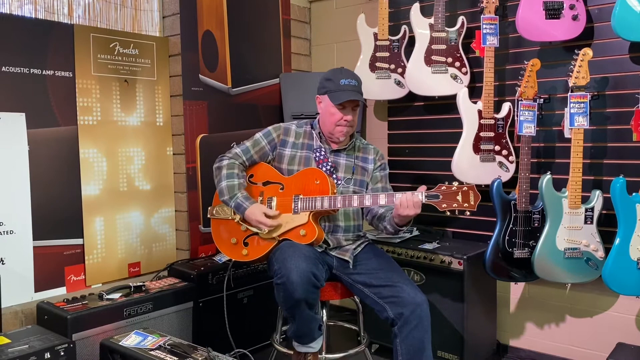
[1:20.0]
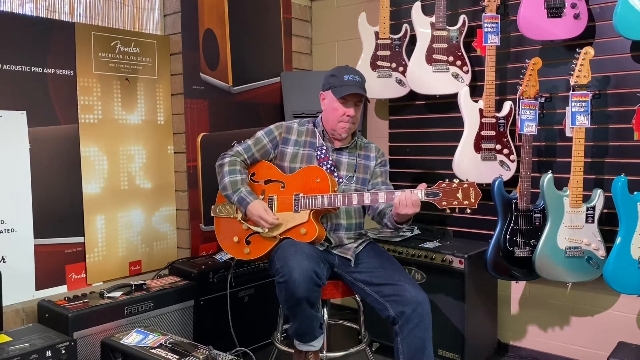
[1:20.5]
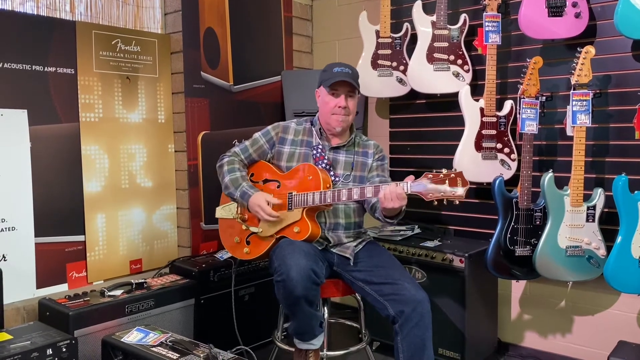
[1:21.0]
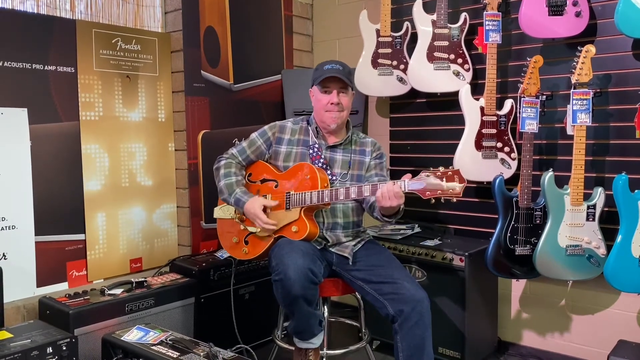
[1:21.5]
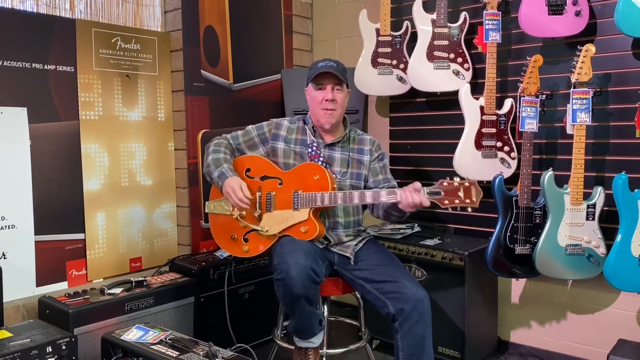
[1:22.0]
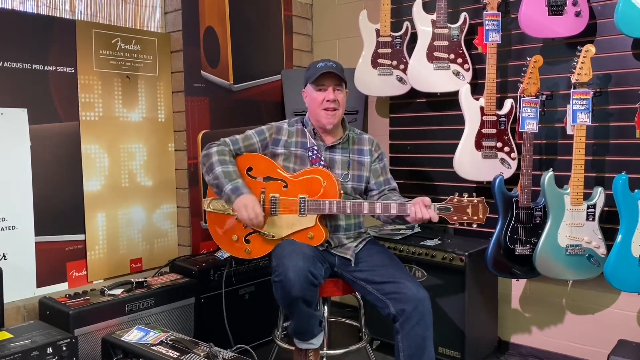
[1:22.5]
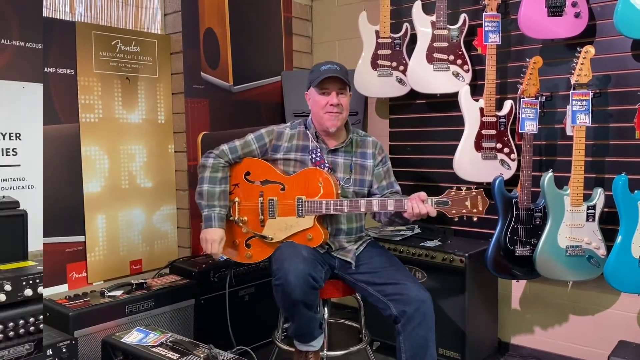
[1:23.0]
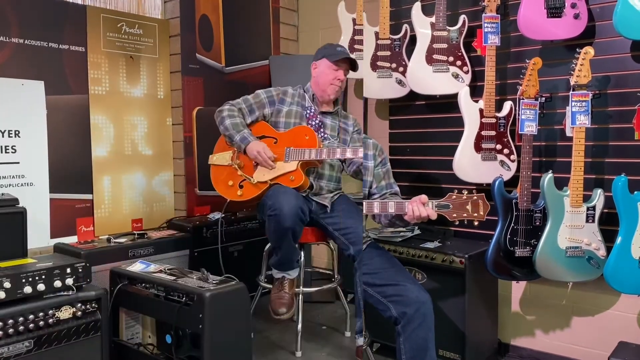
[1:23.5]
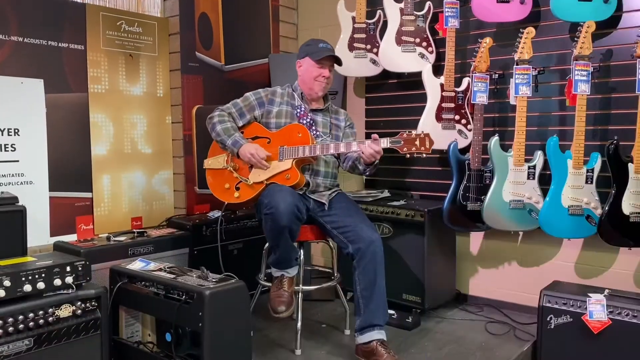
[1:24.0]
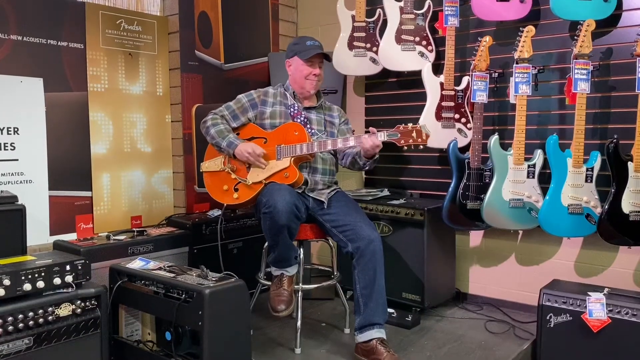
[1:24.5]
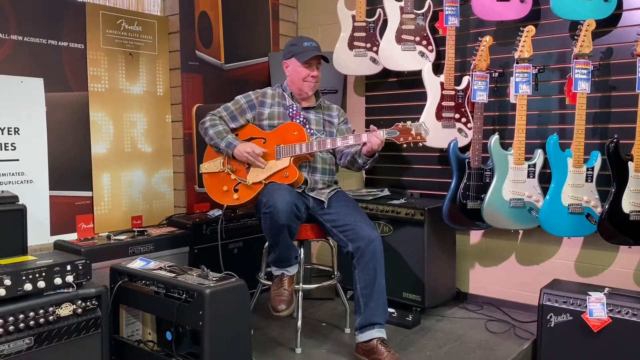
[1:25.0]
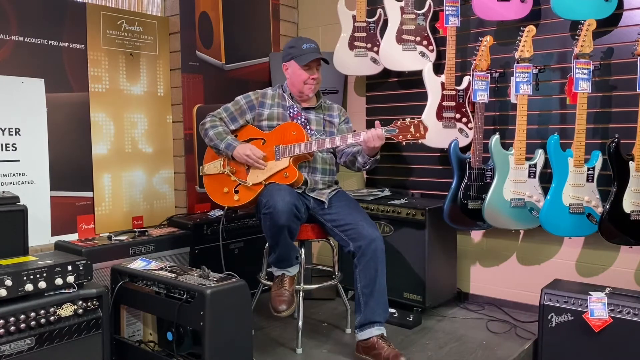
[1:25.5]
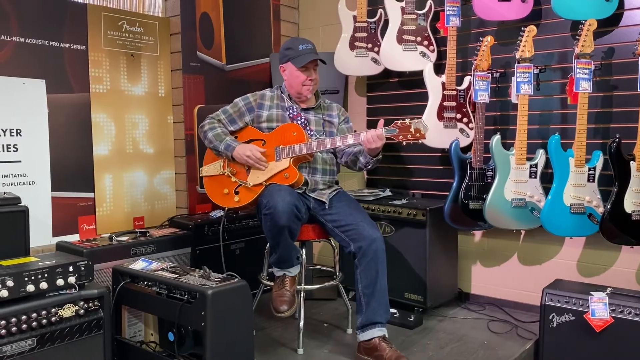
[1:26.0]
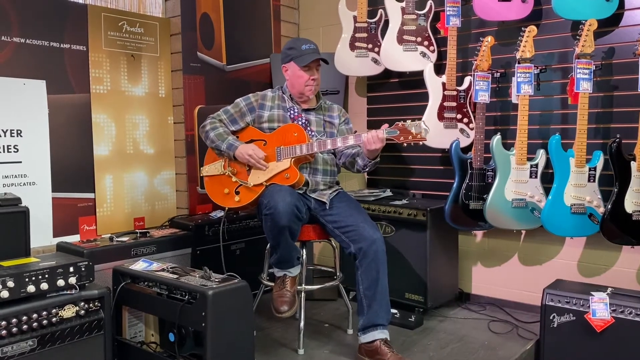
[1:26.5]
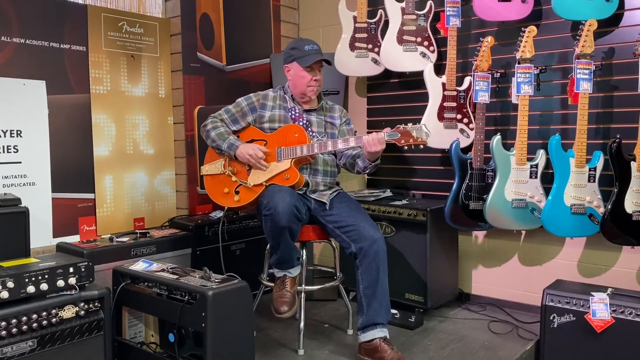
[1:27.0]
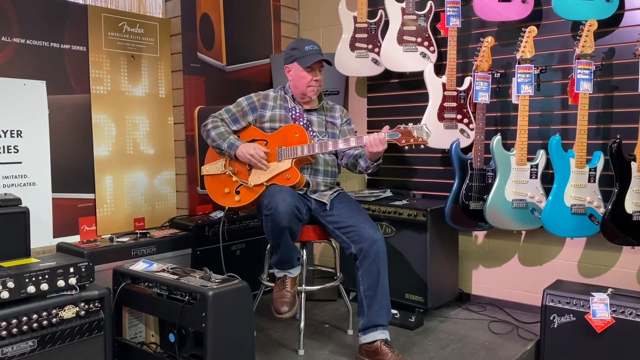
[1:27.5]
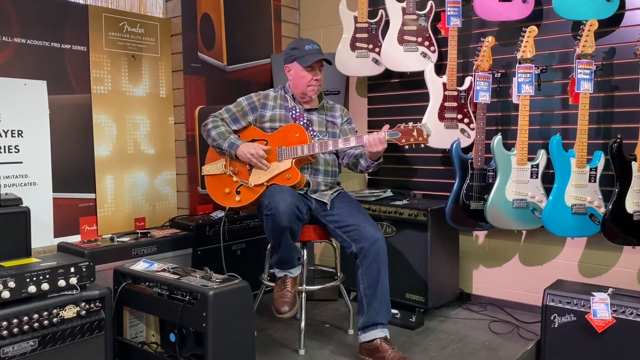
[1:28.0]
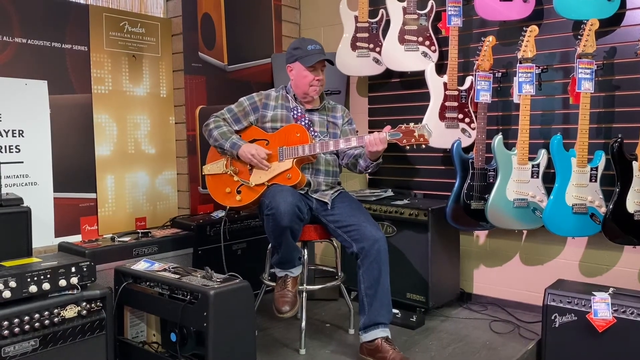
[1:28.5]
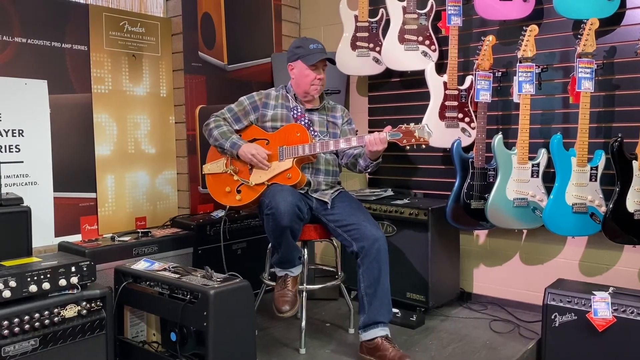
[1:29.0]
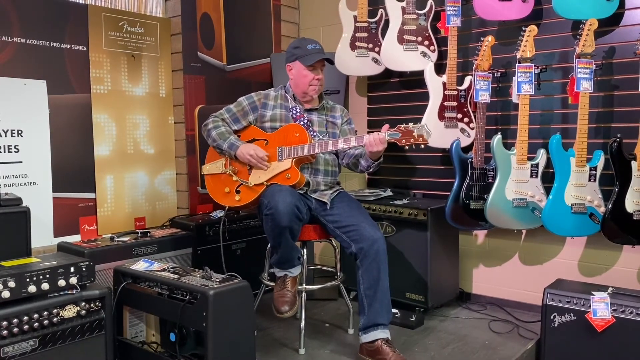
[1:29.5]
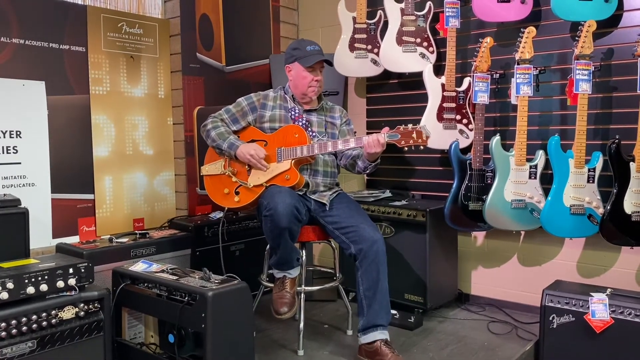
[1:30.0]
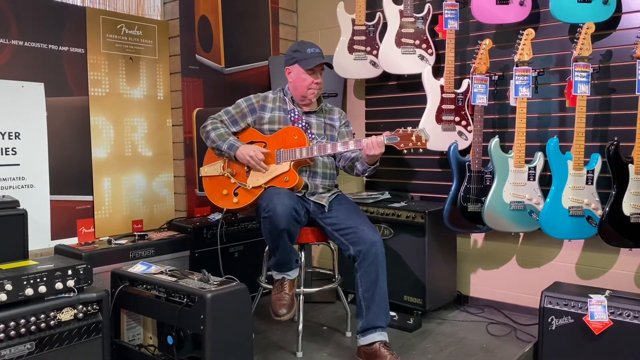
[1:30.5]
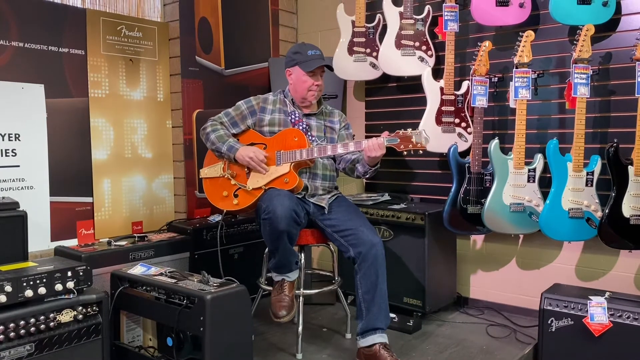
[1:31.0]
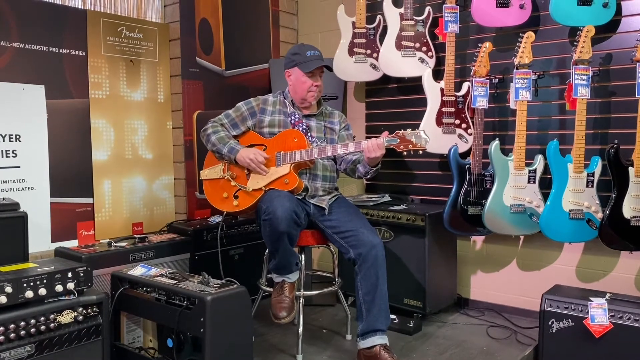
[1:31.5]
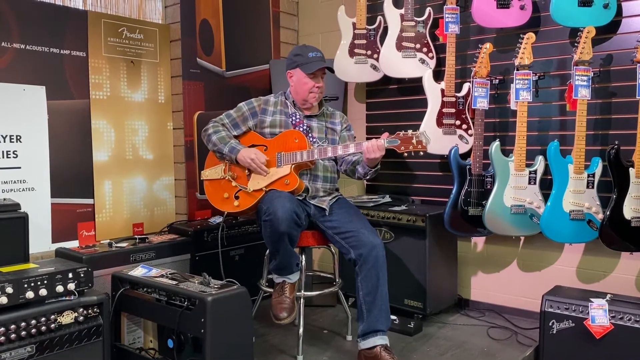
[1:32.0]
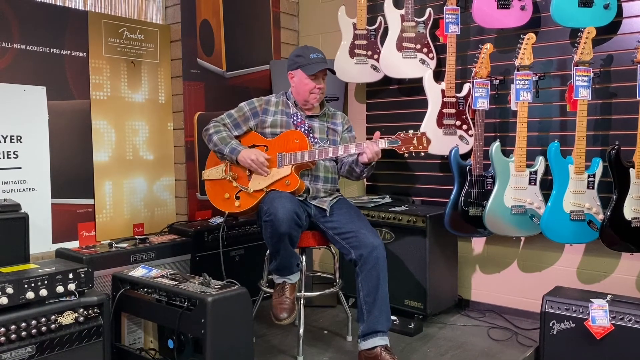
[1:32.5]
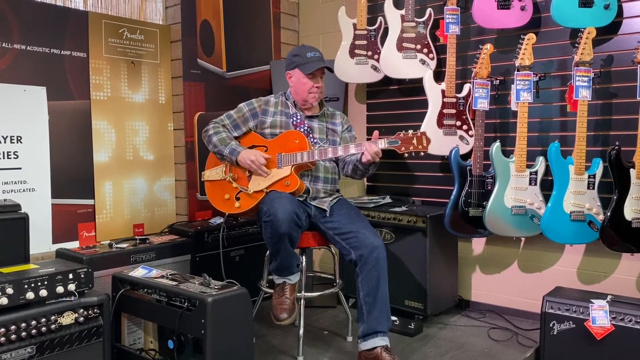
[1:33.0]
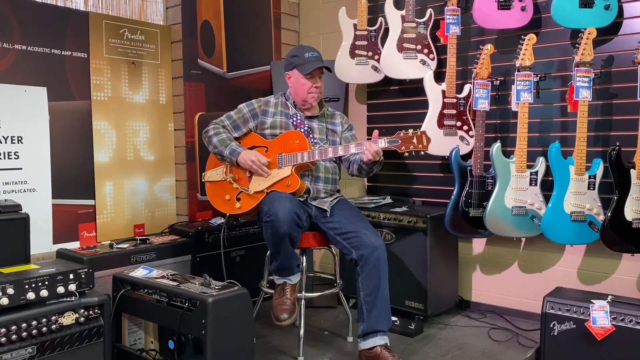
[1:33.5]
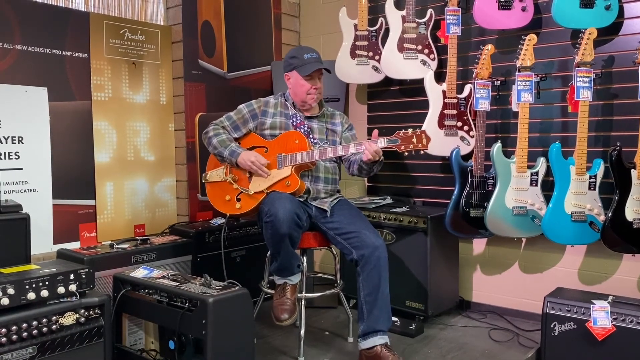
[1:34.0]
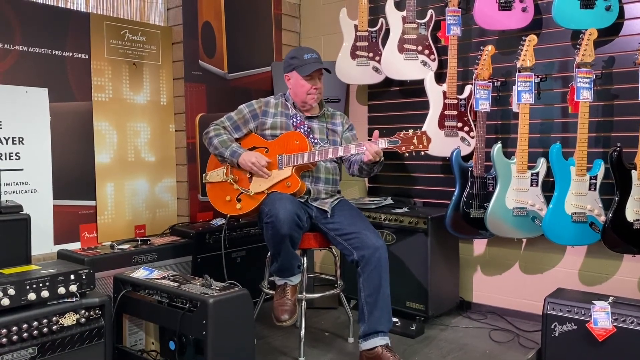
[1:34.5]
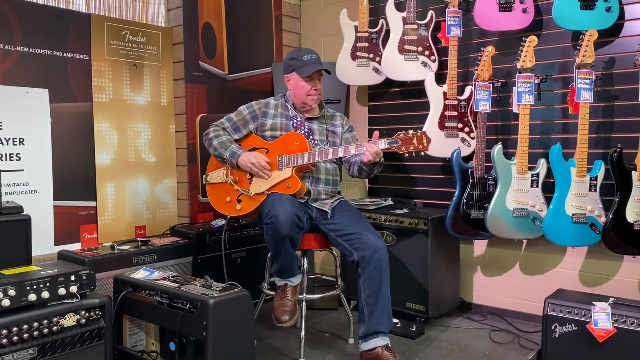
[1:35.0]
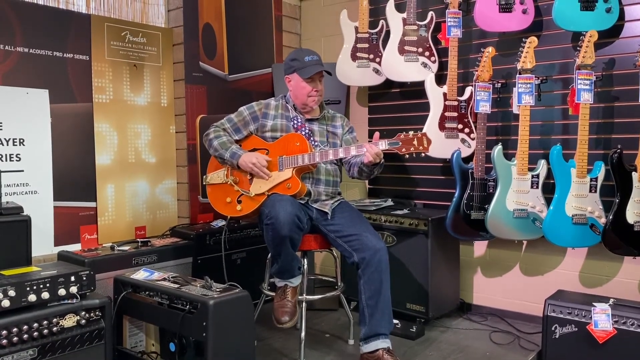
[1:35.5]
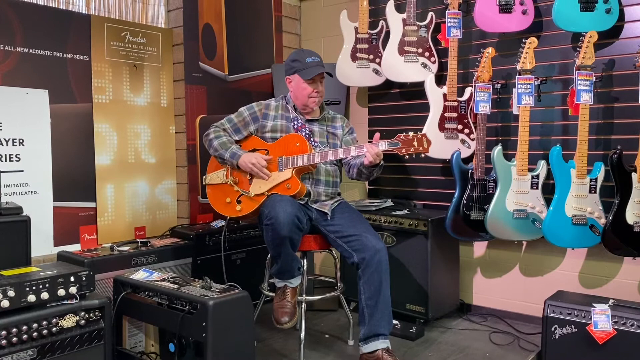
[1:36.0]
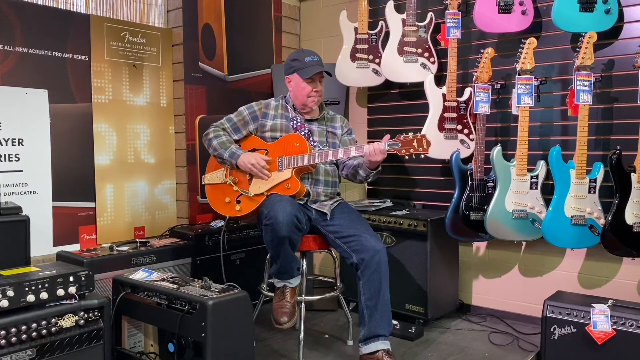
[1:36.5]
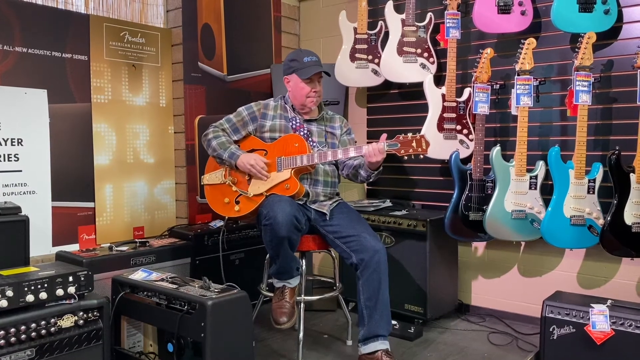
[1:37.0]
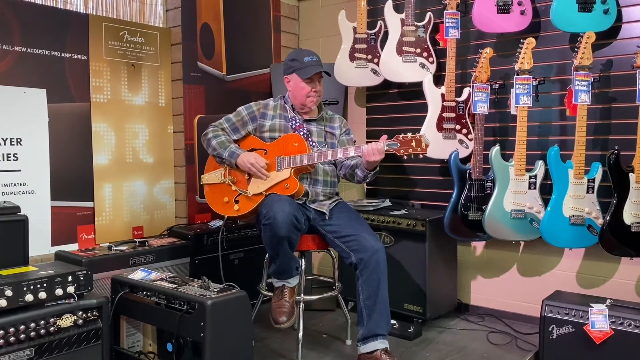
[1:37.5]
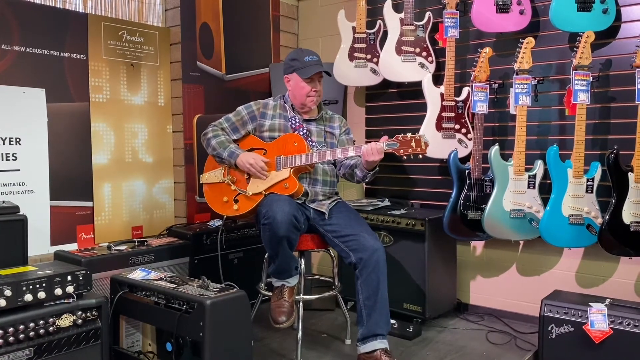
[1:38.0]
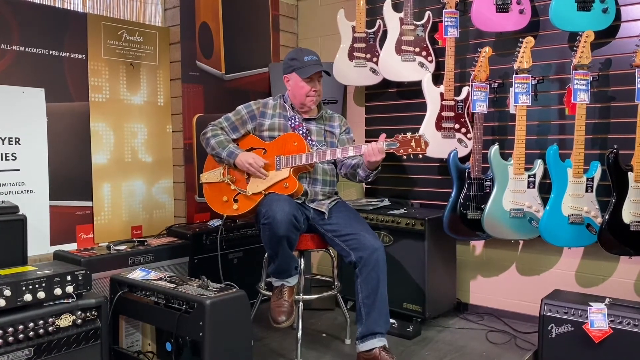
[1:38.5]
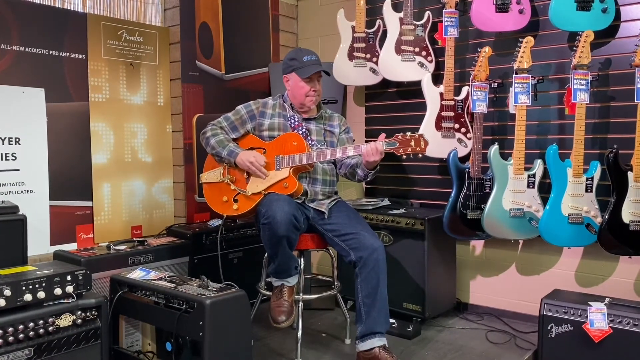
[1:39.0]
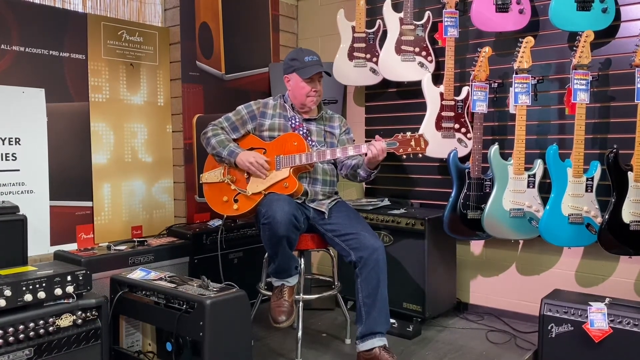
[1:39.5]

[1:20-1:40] The man continues showing the guitar and then talks a bit more. The video then switches to a different, lower angle, giving a bottom-looking-up, wider vertical view of him as he keeps showing the guitar. His shoes are now visible: very glossy brown shoes. The strap that holds the guitar around his neck has an American flag design with stars, in red, white and blue. He also wears a gray cap with pale blue text in the middle that is too small to make out.